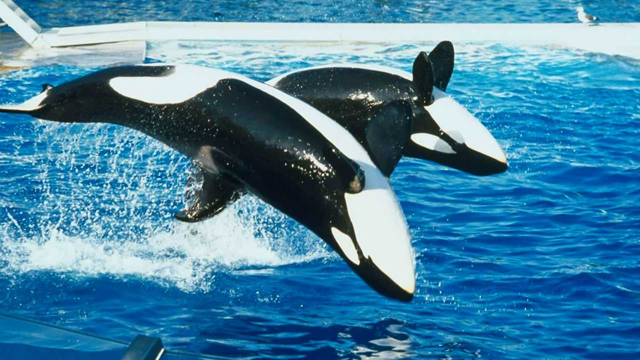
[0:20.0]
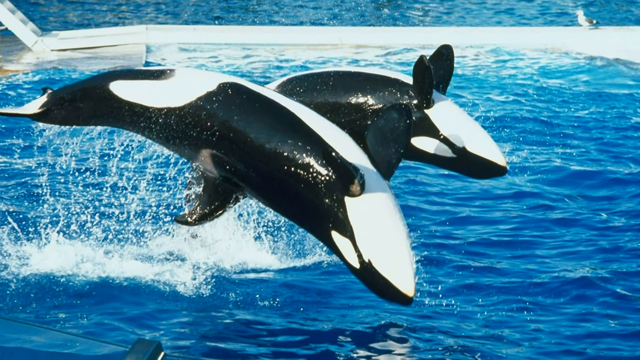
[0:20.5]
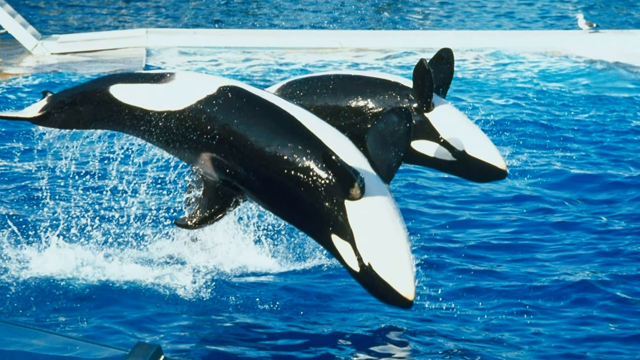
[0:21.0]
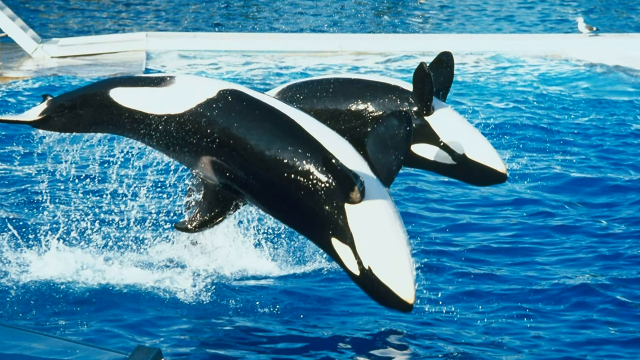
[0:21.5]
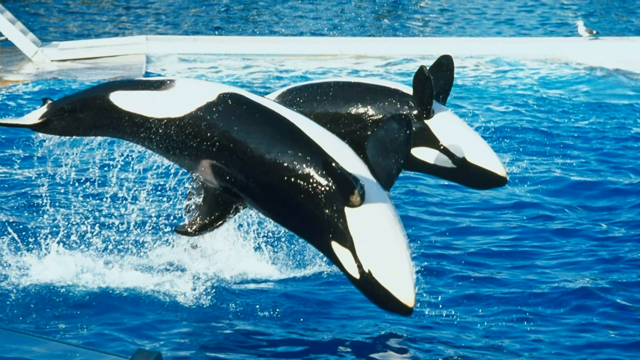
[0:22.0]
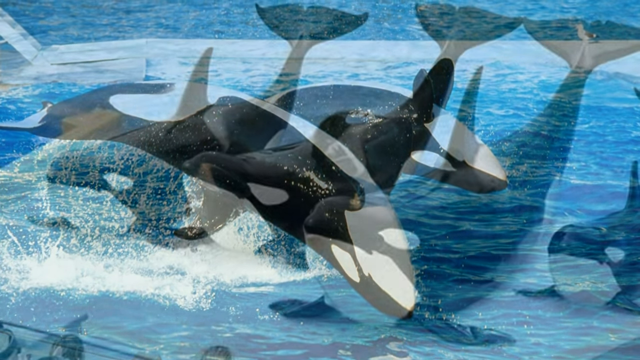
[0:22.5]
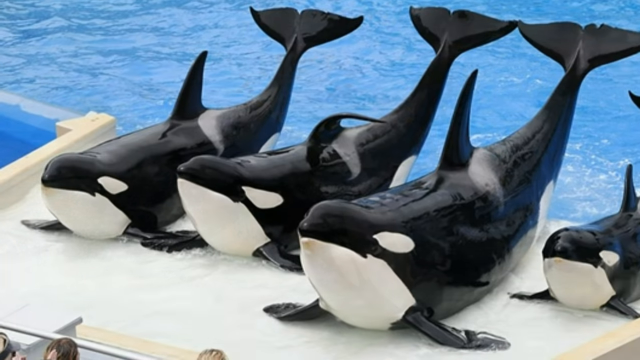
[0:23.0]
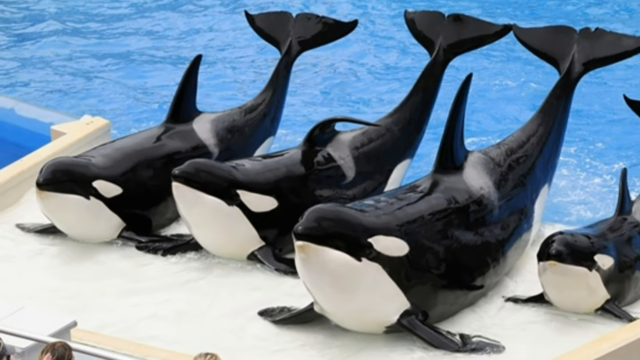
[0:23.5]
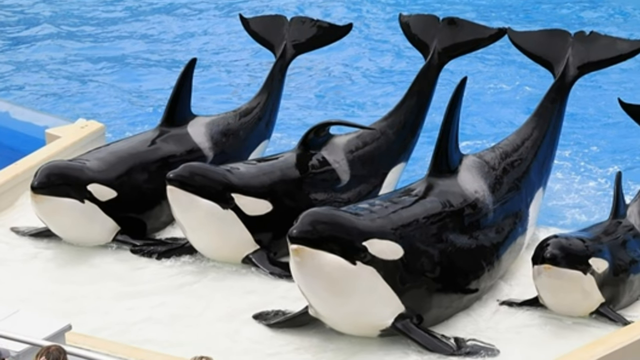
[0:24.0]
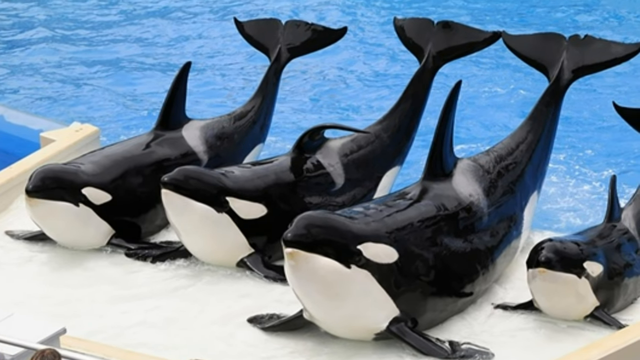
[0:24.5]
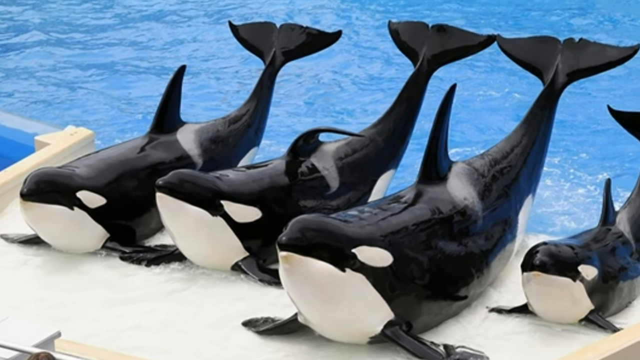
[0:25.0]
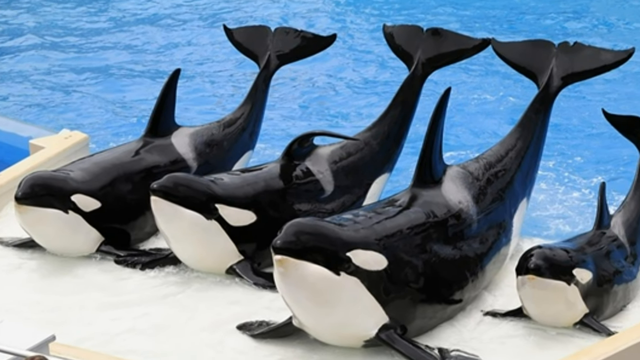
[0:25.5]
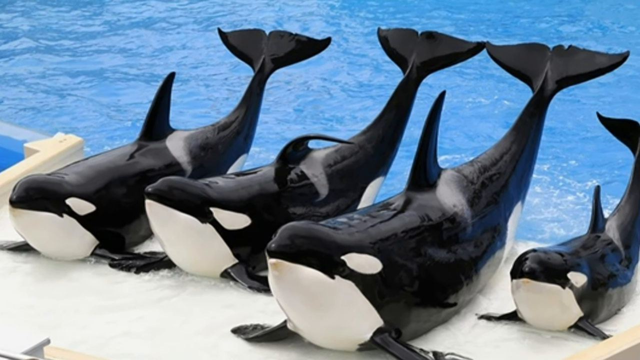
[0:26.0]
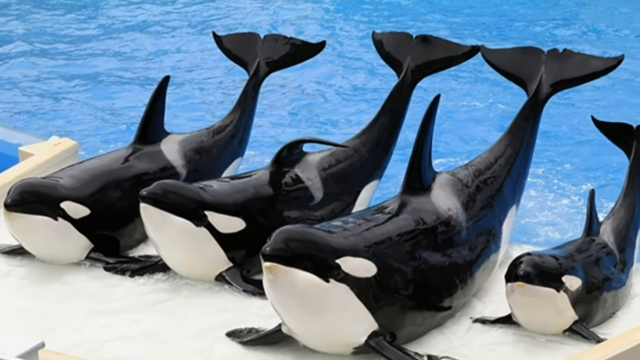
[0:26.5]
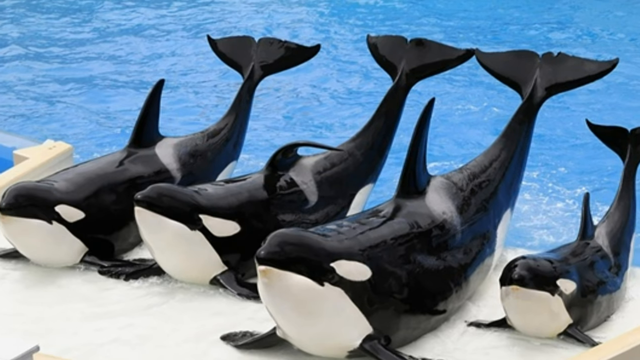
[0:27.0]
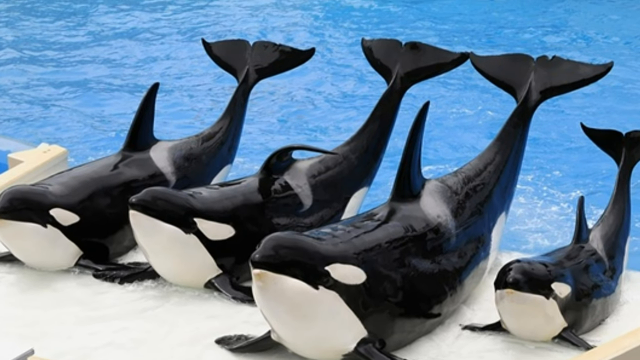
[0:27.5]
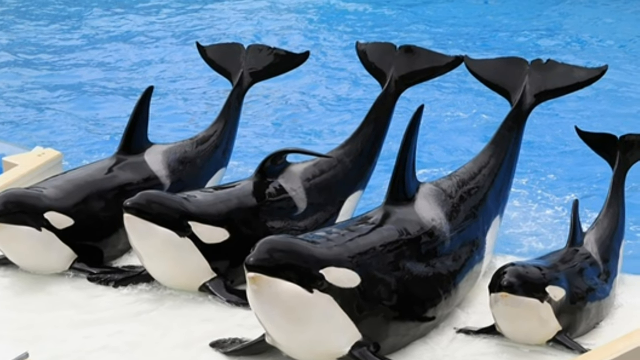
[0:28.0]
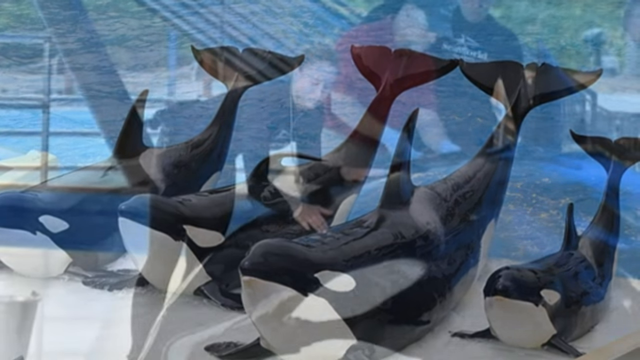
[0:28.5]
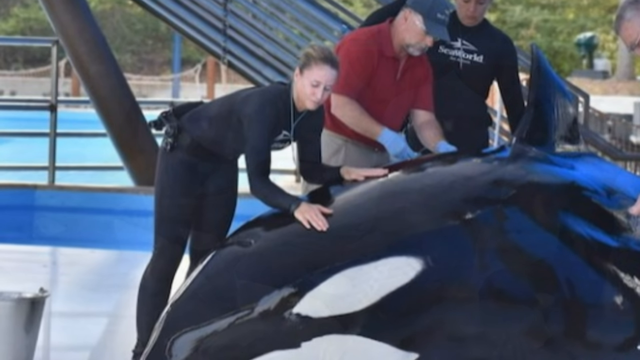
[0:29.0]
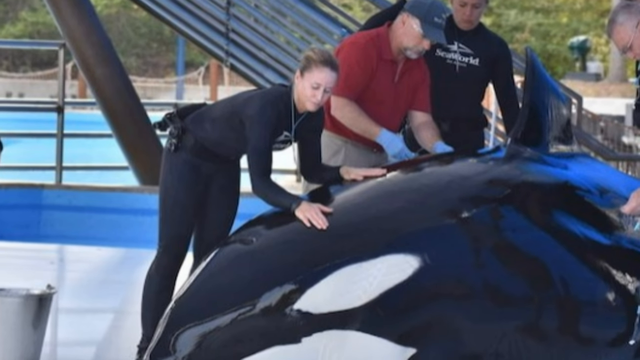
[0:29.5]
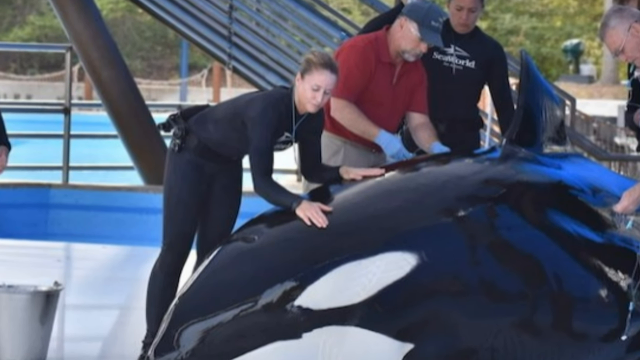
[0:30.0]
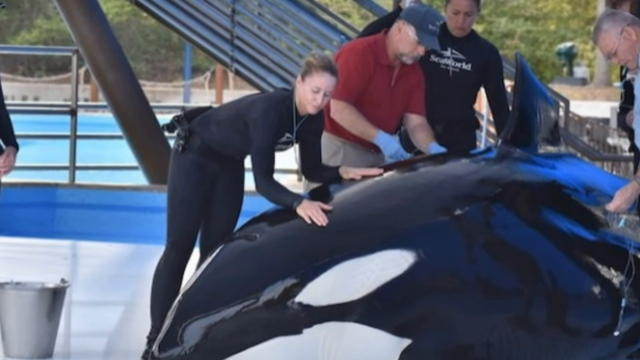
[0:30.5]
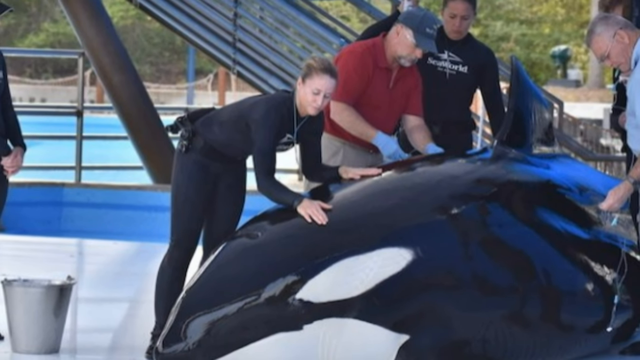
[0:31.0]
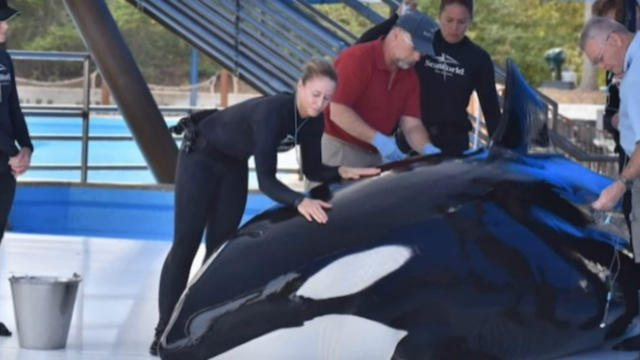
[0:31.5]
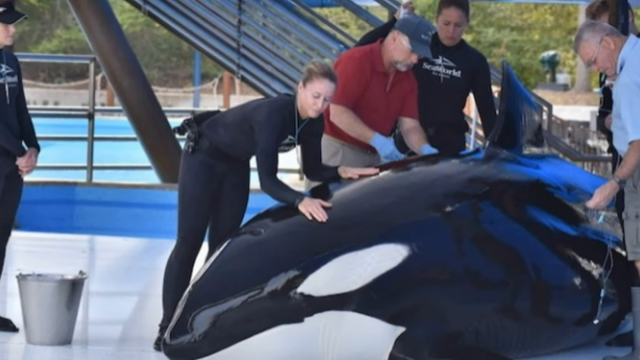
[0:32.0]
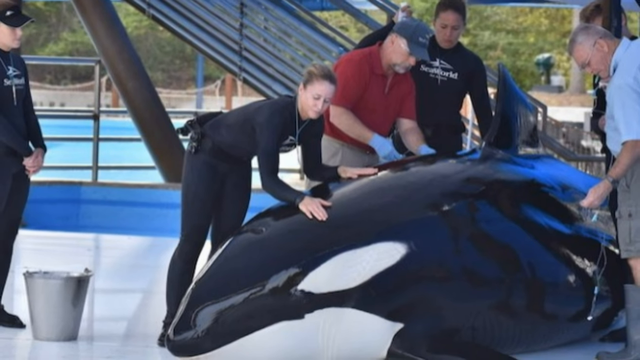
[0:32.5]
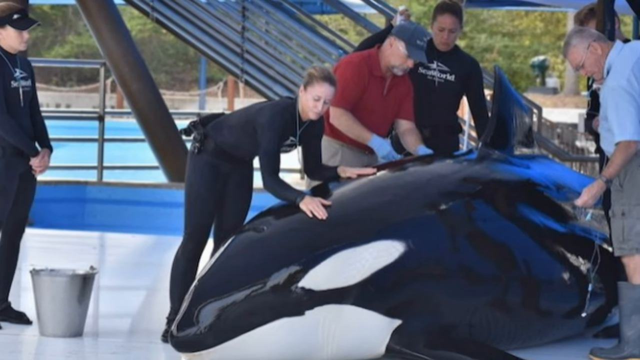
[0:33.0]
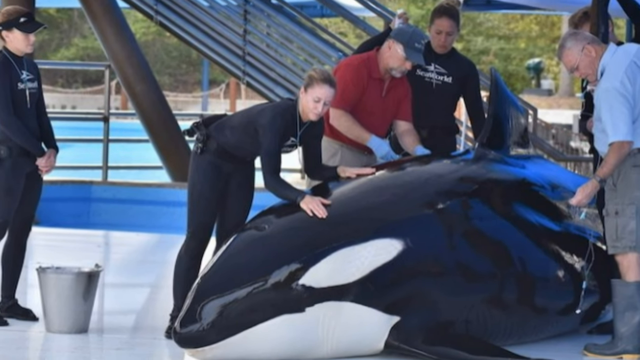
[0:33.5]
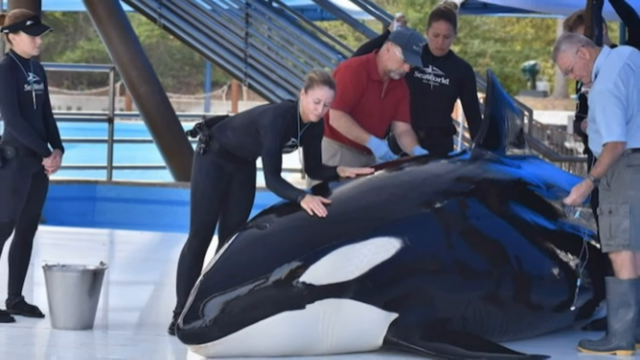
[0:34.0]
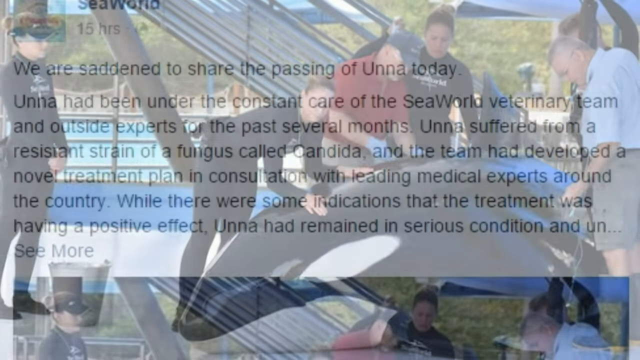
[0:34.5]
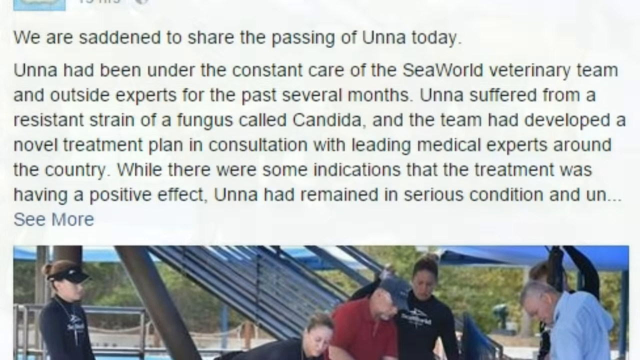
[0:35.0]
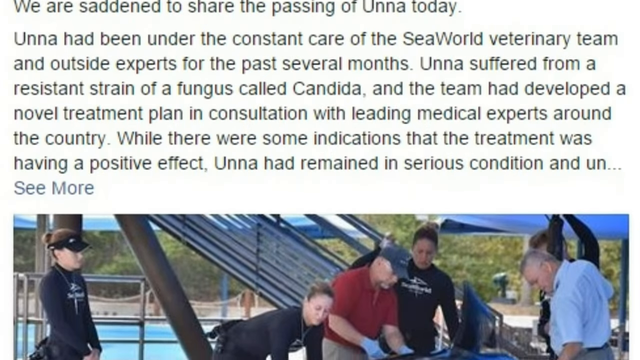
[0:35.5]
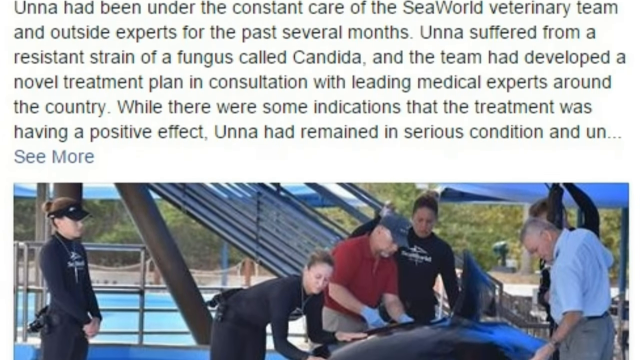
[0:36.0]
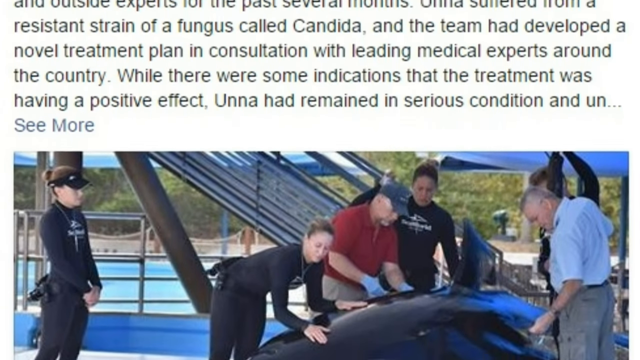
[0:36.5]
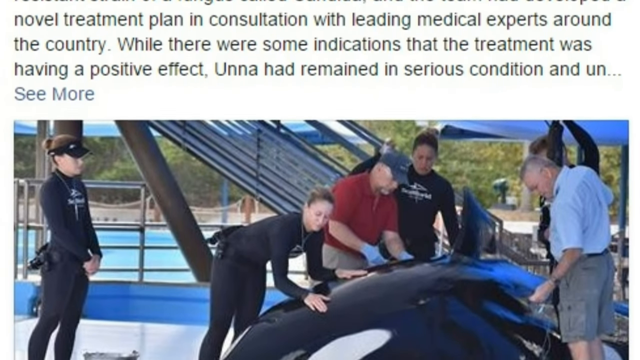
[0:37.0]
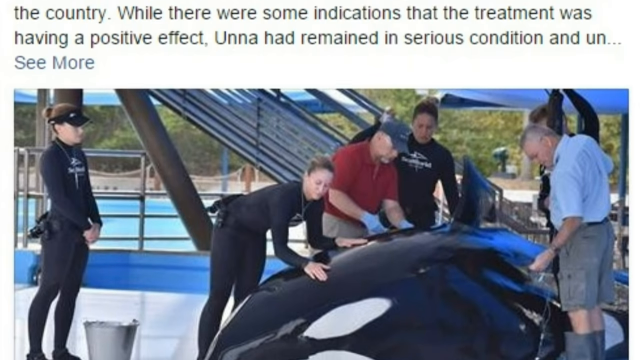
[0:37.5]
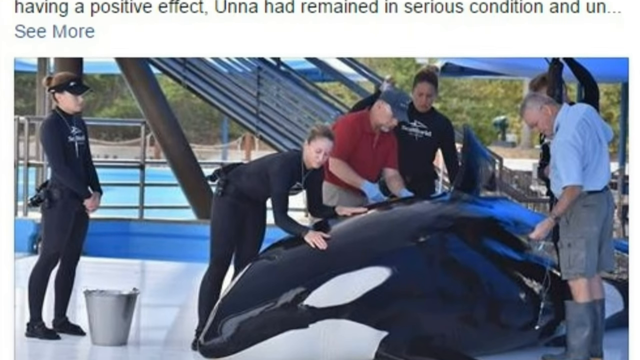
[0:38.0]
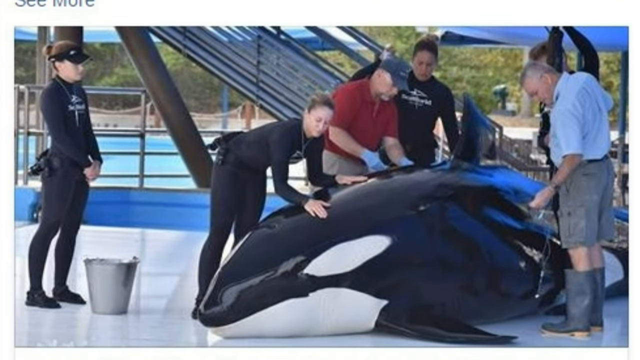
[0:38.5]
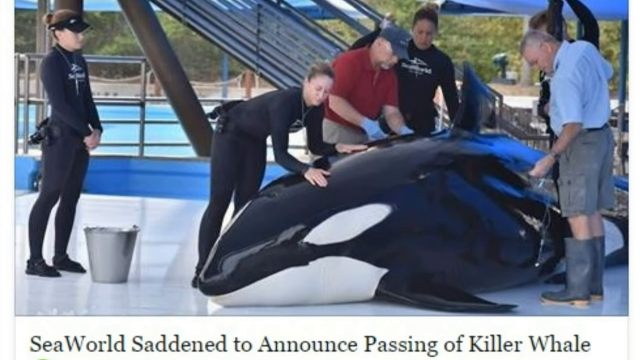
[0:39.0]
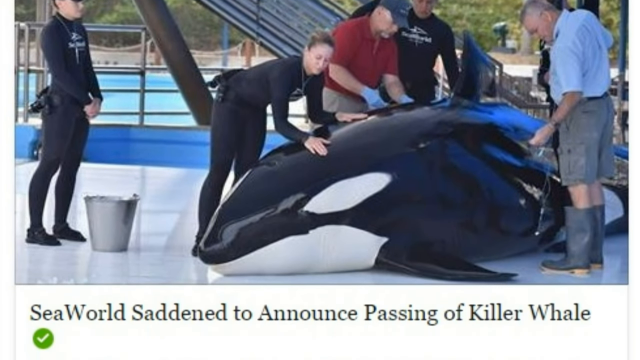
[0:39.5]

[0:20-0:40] Two dolphins do a backflip, up in the sky with their fronts upside down; the orca is white and black. The video transitions to three black and white dolphins lying down by the water, which is clear blue. The three dolphins have their tails up in the air, and a fourth dolphin also has its tail up in the air; they are by the river. Next, a woman with dark brown hair in black swimming gear pats a black and white giant orca. A man in a black baseball cap, a red t-shirt and light blue gloves is also touching the giant dolphin, and beside him a man in a black t-shirt stands next to the man in red. There are a couple of staircases in the background, and a man in a white shirt stands by the end of the giant dolphin. The video then shows black text on a white background that says "we are starting to share the passing of UNO today," followed by text beginning "UNO has been under the constant care of the," then "UNO suffered from a resistant strain of a fungus called Candida and the team had developed a novel treatment plan in consultation with leading medical experts around the country," and "UNO had remained in serious condition," along with "see more." The video zooms up to show a woman in black swimming gear alongside a man in a red t-shirt patting a giant dolphin while a woman stands to the left and observes.